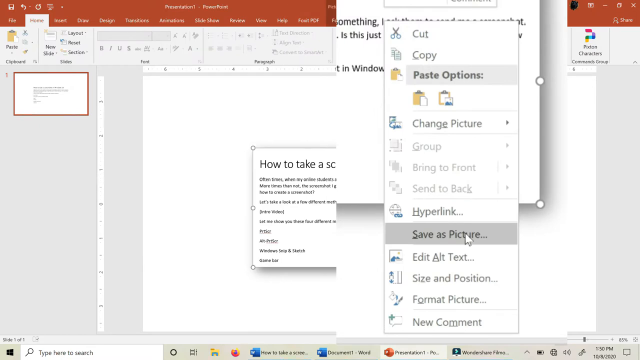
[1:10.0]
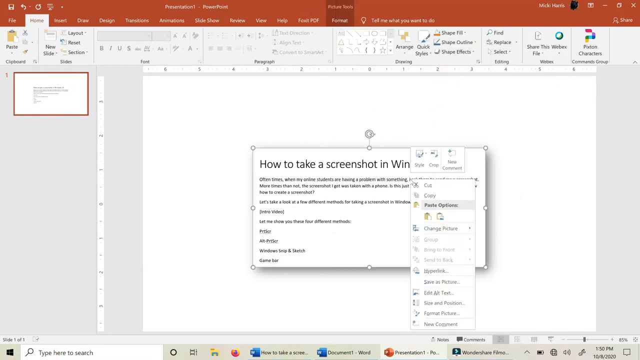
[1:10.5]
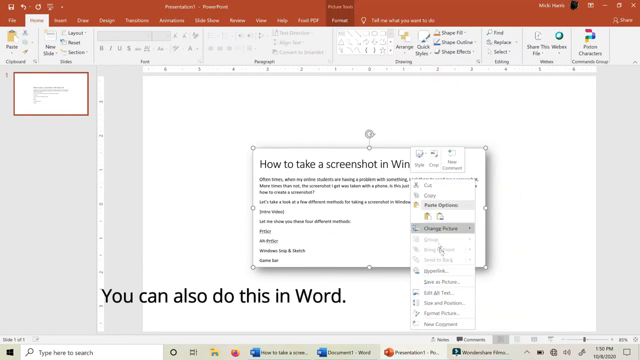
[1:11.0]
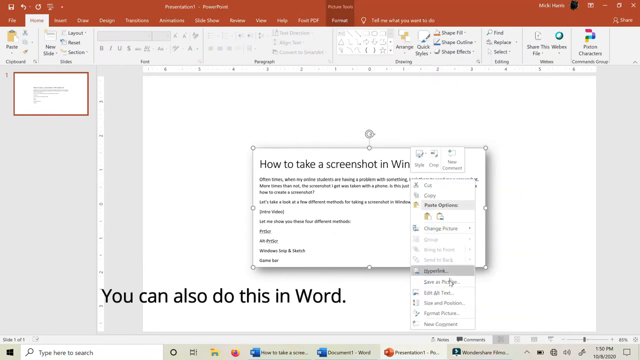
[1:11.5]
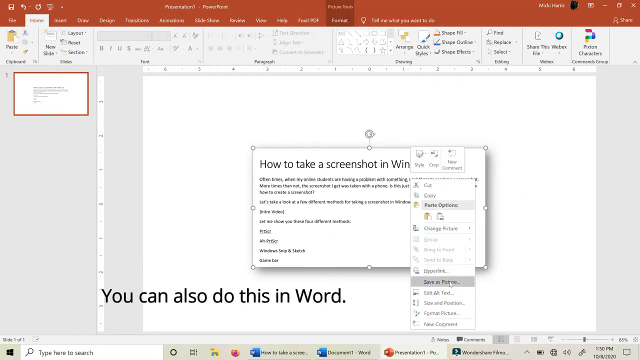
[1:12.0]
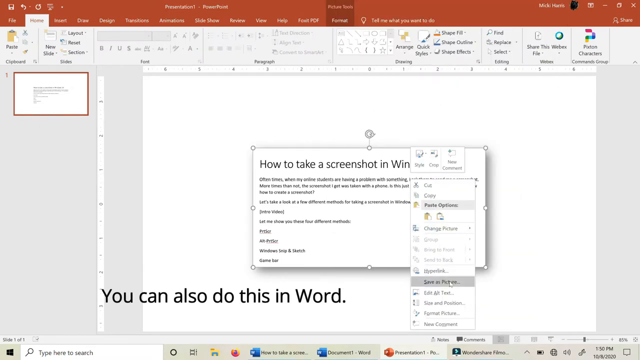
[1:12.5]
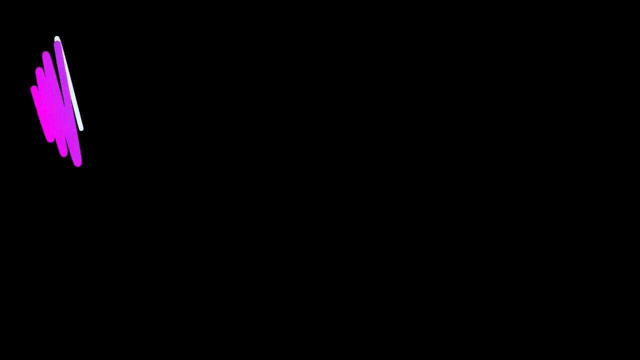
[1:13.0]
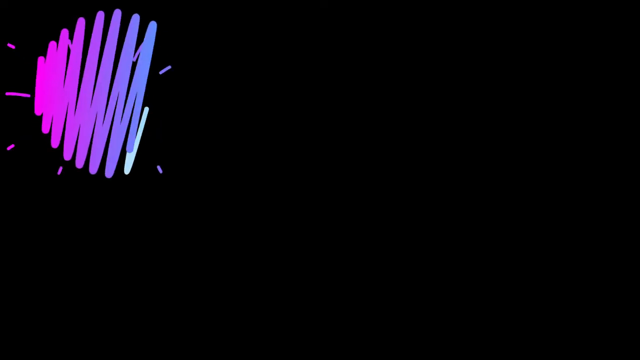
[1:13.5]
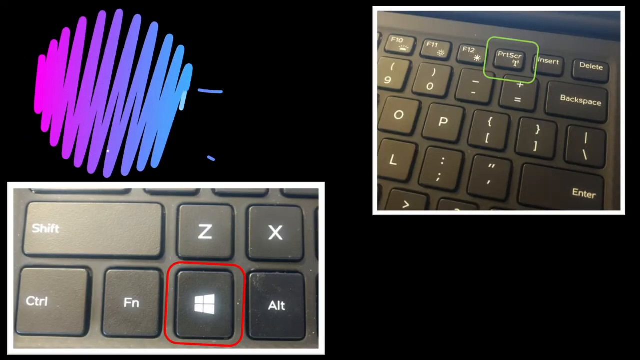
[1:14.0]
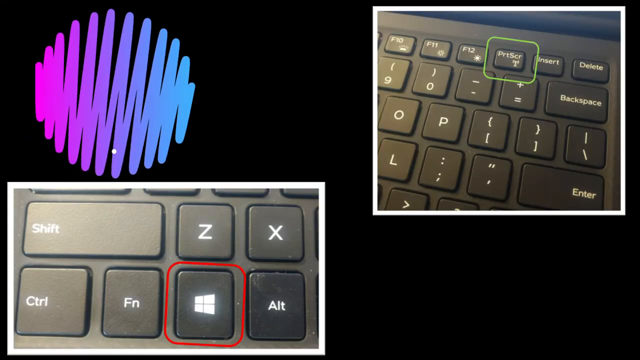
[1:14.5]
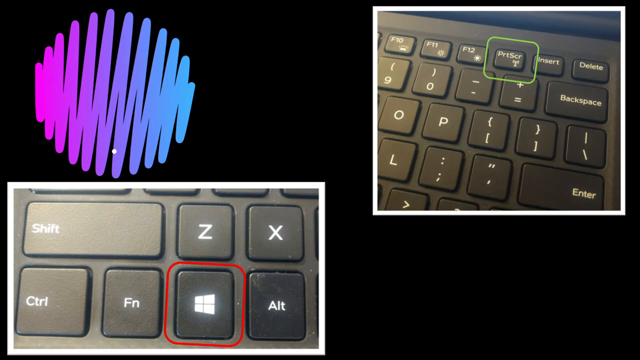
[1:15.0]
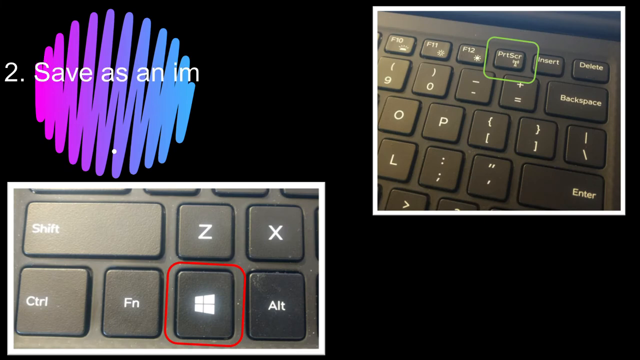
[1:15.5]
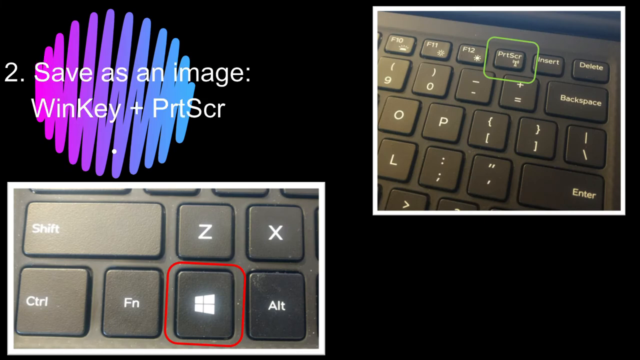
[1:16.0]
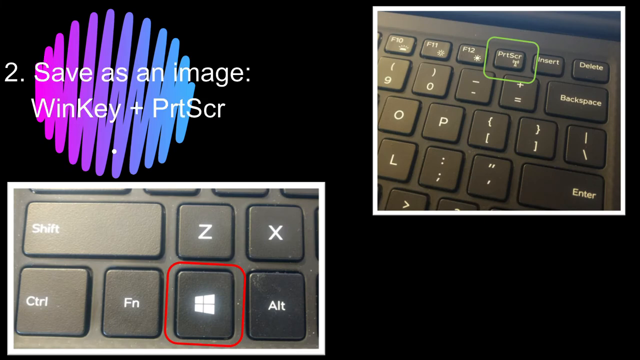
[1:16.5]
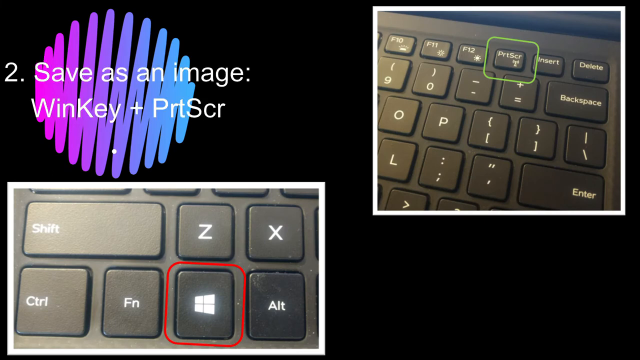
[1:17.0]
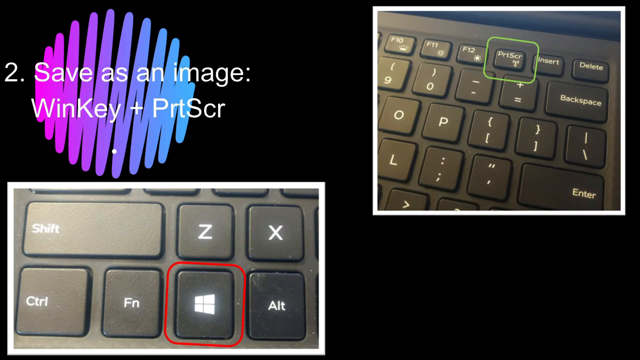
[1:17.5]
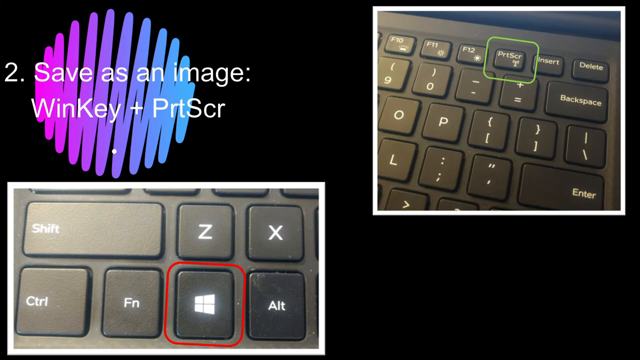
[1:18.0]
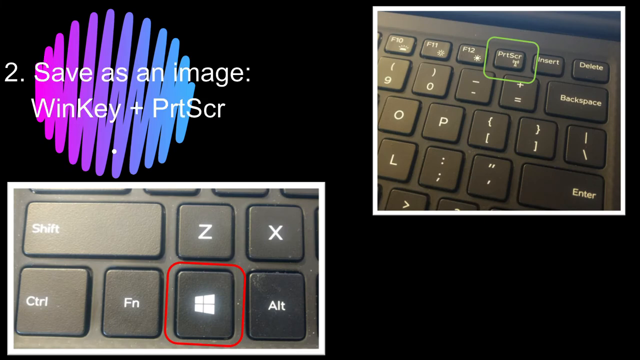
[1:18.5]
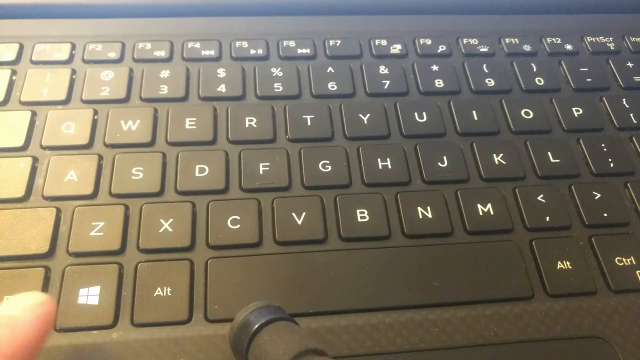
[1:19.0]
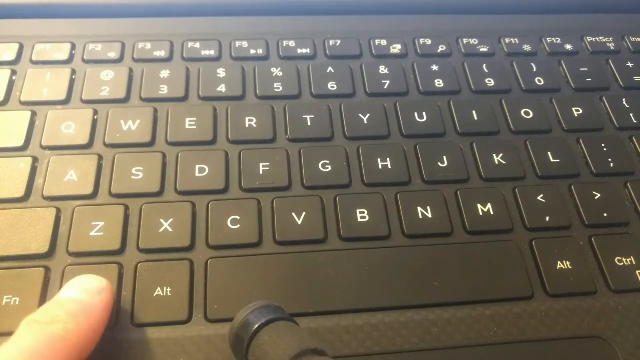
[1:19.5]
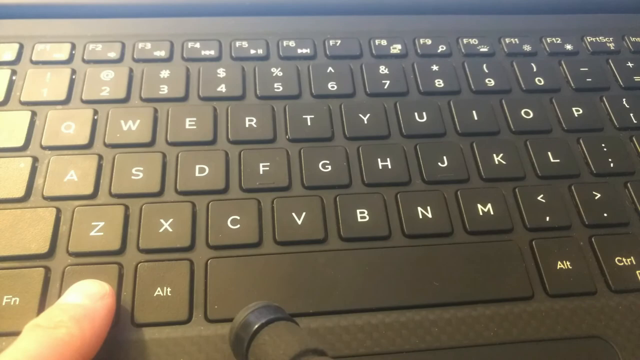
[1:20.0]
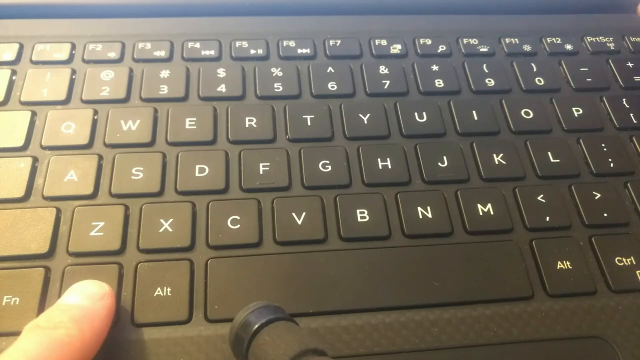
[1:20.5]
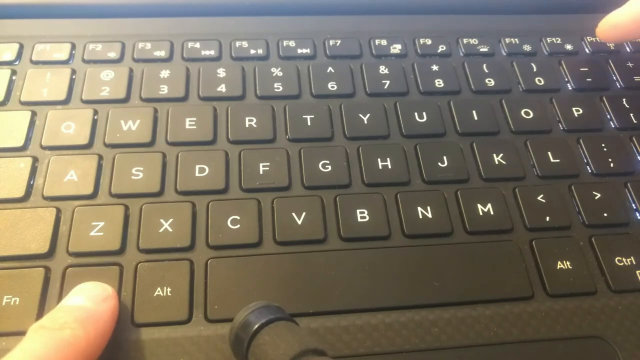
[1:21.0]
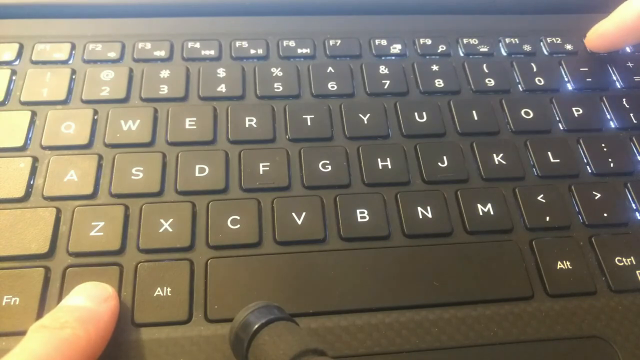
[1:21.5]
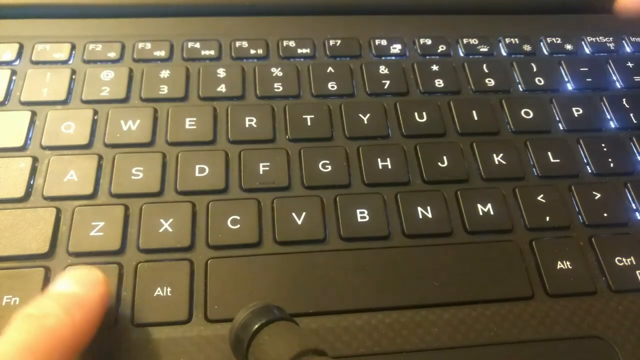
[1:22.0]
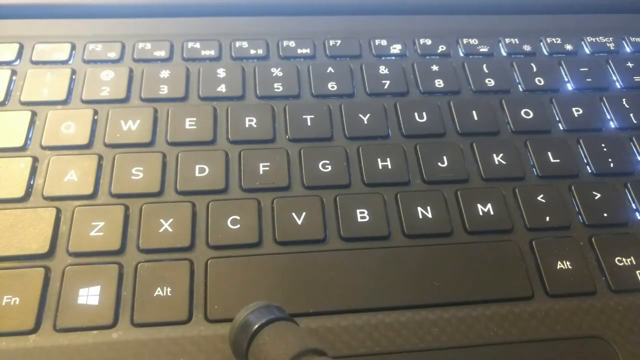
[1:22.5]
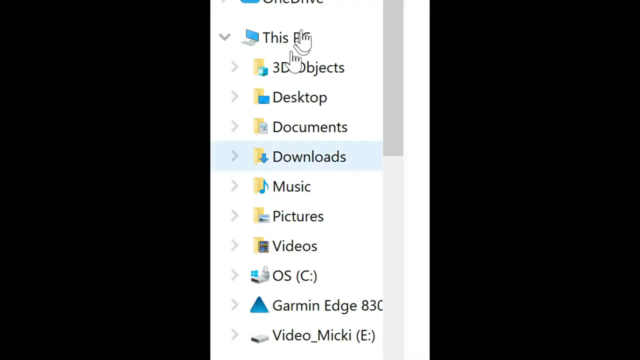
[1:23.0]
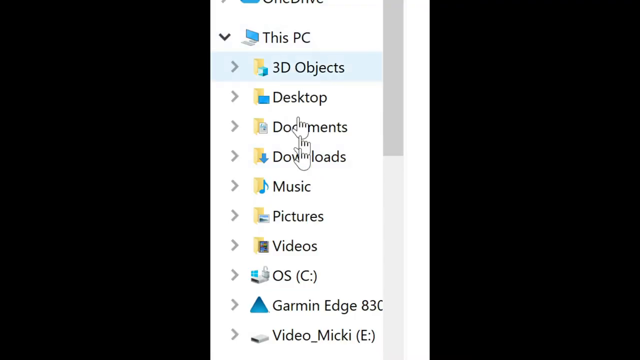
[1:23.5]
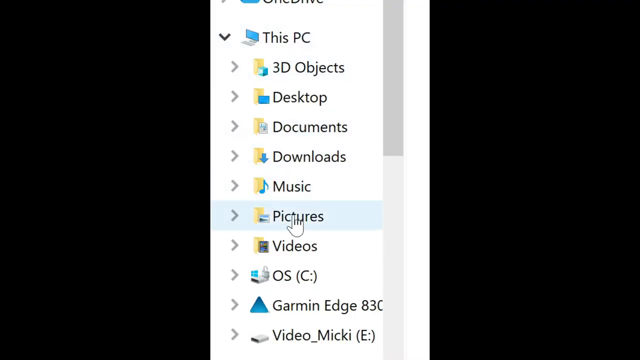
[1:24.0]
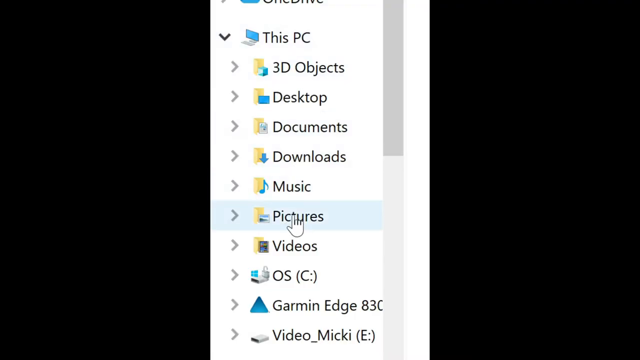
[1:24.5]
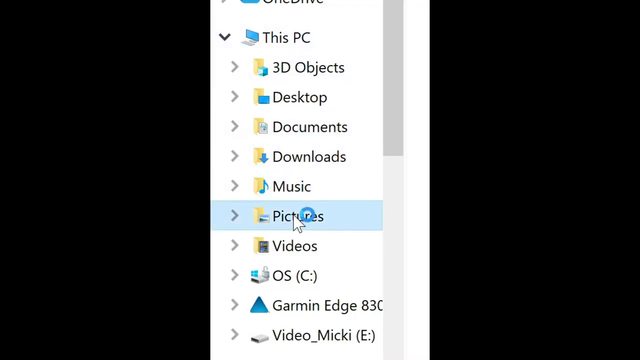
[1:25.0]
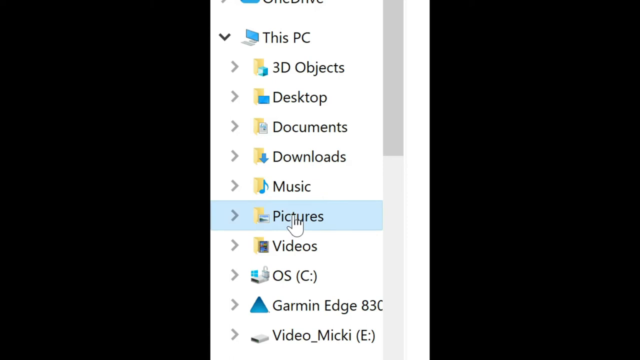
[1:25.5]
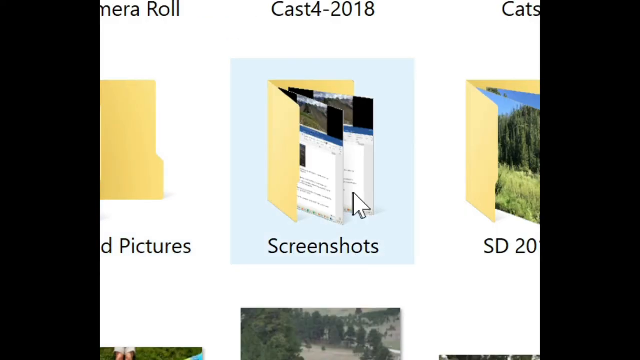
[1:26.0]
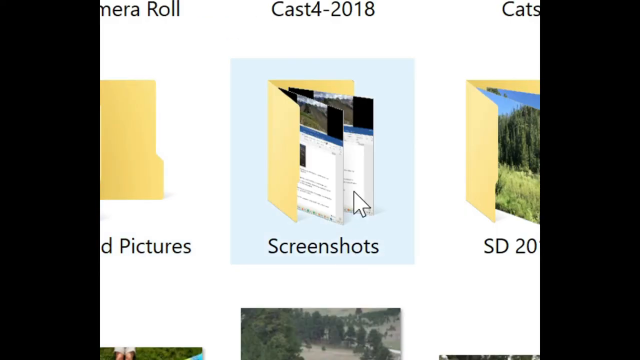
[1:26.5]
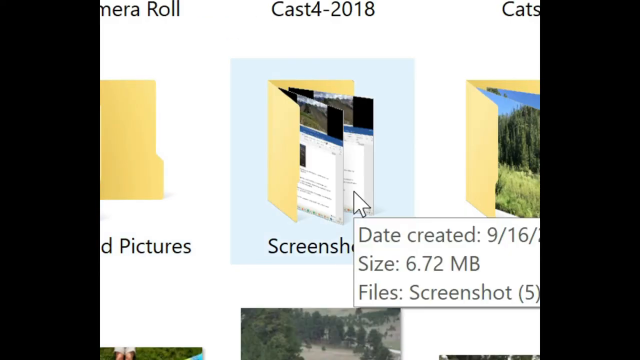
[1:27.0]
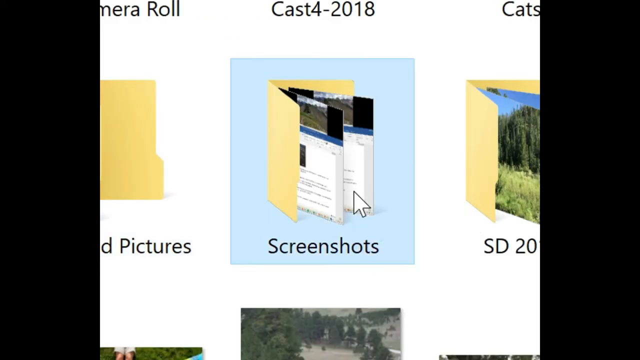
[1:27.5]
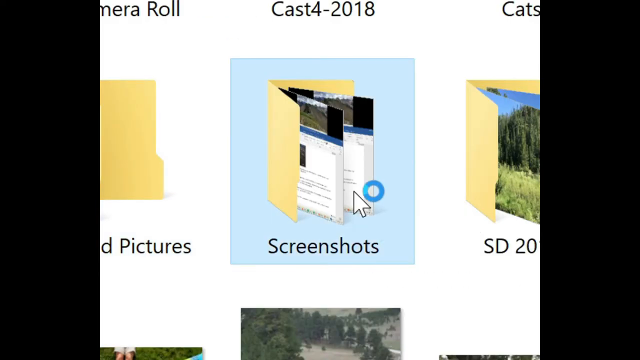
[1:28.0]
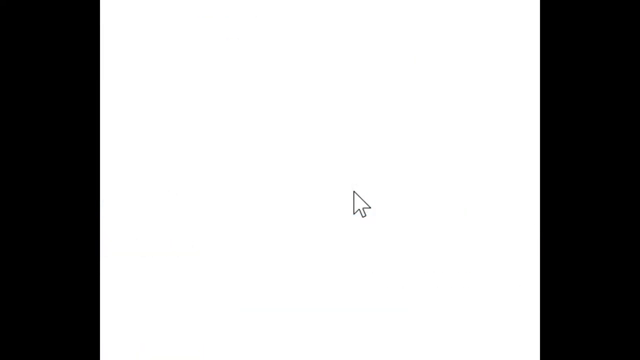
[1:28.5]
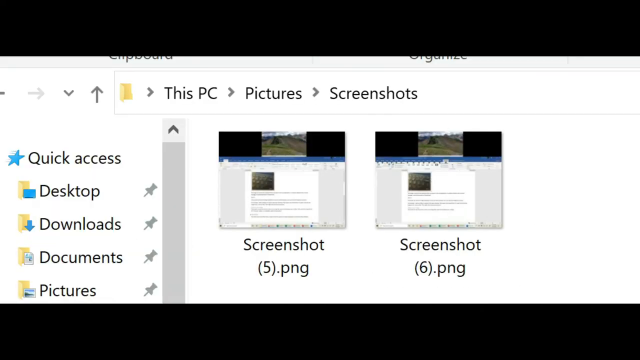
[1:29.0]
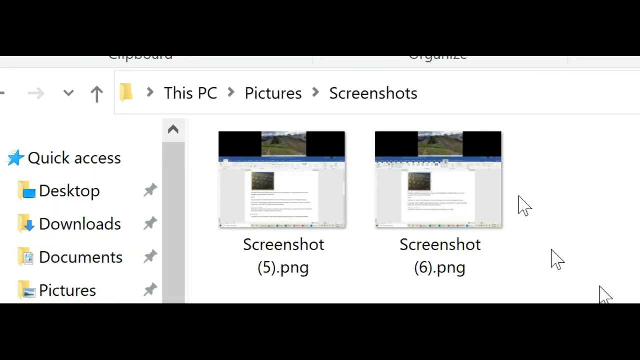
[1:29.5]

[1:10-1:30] In the PowerPoint presentation, having just cropped the screenshot, they open a pop-up and click save as picture. The screen goes black and the squiggly-line circle appears in the top left, with close-ups of keyboards in the top right and bottom left. In the bottom left one, a red line surrounds the Windows key; in the top right one, a green line surrounds the print screen key. In white font the circle reads "2, save as an image, win key plus print screen key." Back on a keyboard, someone presses two keys at the same time, the Windows key and another key that cannot be seen. A pop-up comes up, and the person selects pictures and then screenshots.